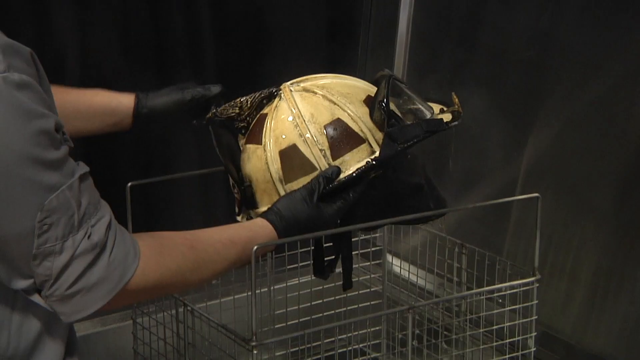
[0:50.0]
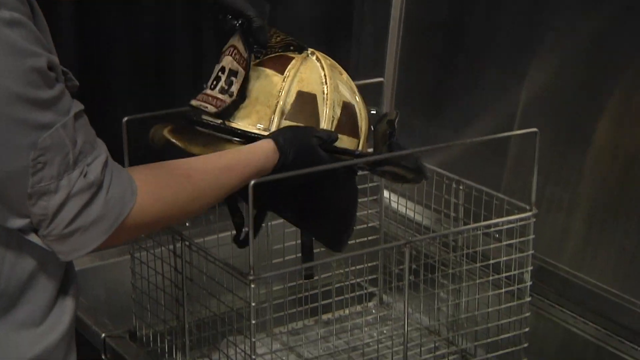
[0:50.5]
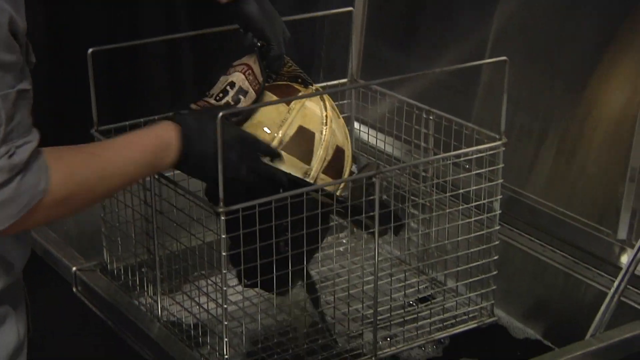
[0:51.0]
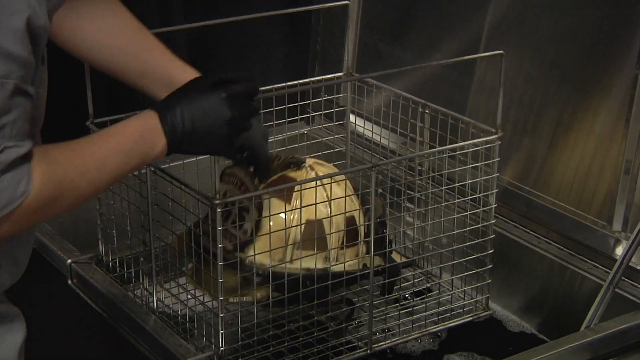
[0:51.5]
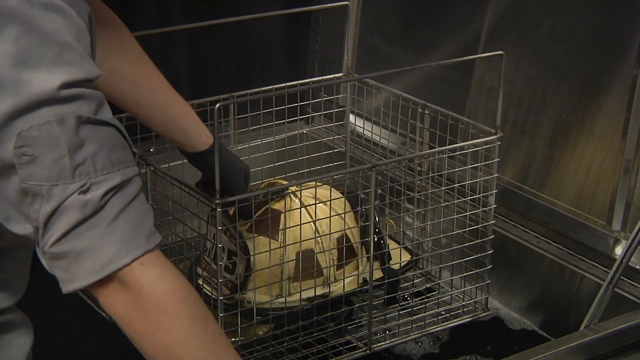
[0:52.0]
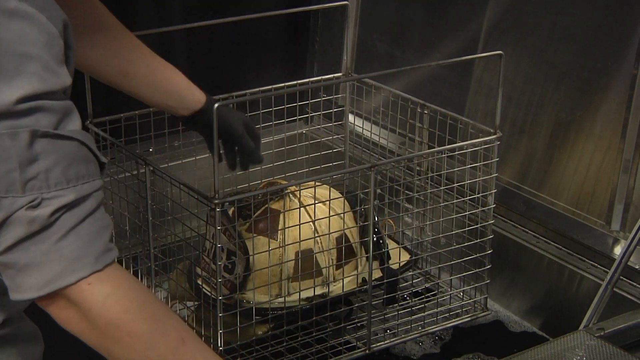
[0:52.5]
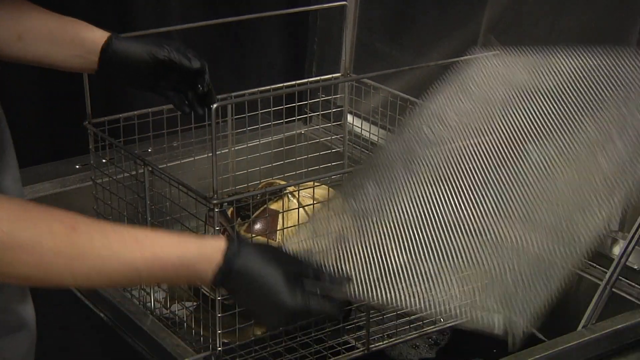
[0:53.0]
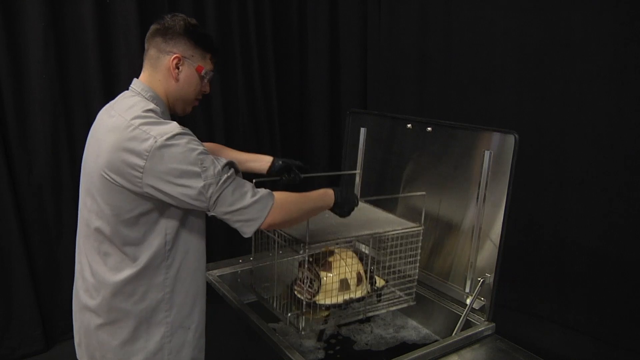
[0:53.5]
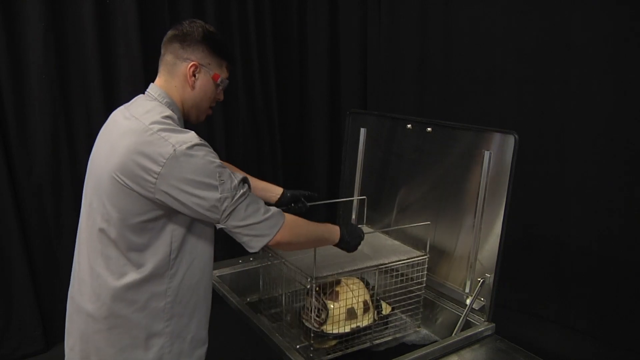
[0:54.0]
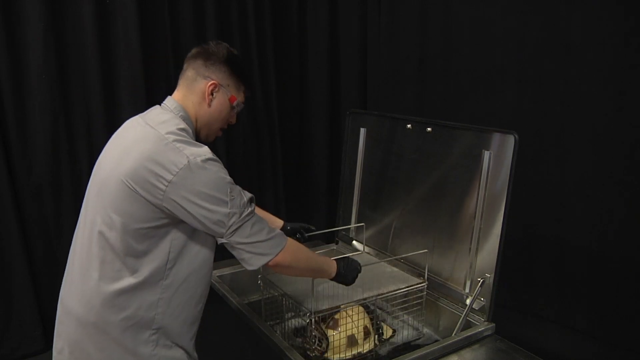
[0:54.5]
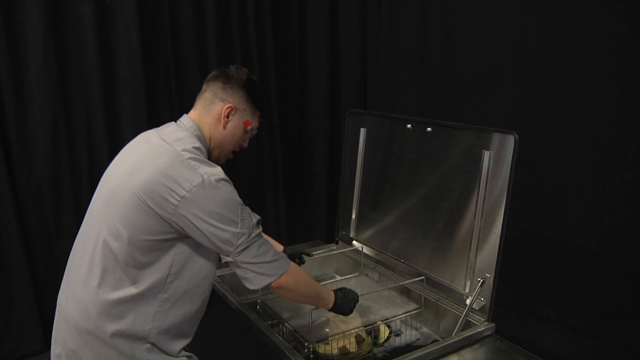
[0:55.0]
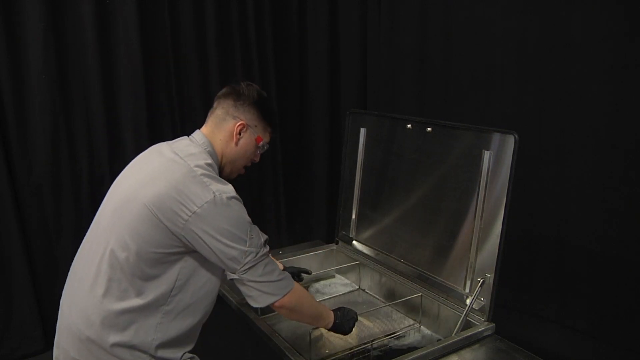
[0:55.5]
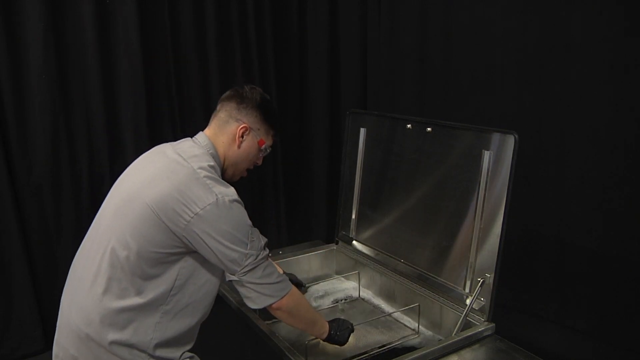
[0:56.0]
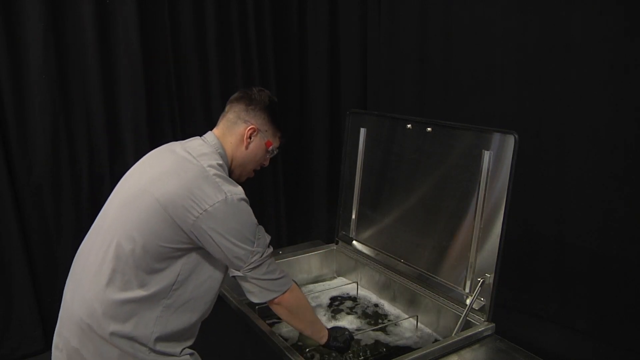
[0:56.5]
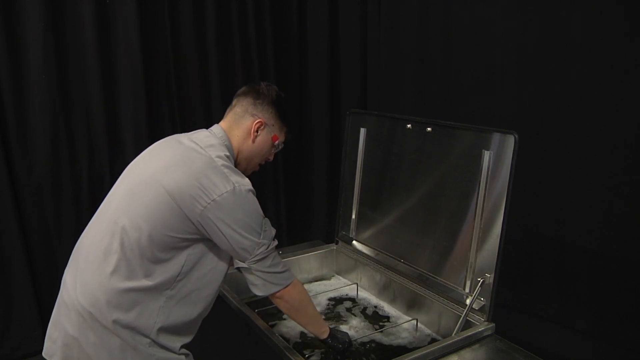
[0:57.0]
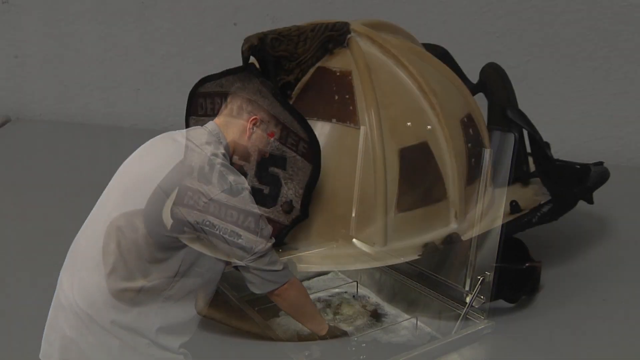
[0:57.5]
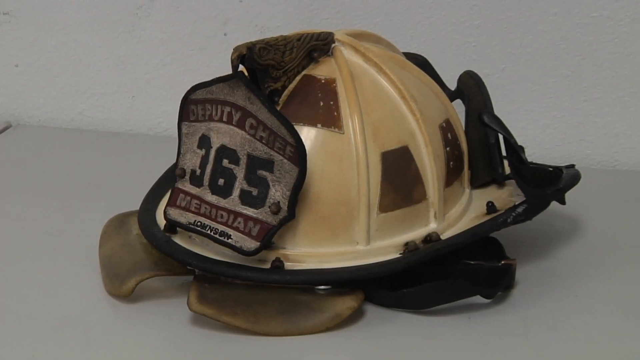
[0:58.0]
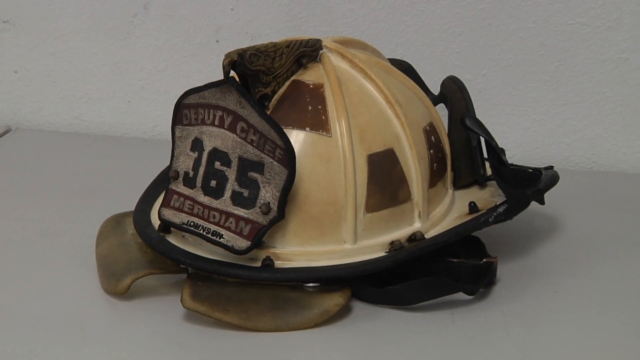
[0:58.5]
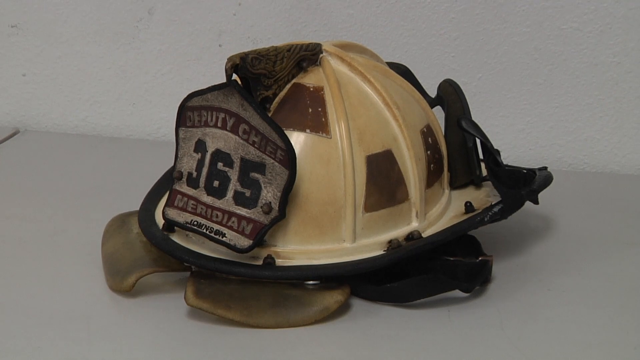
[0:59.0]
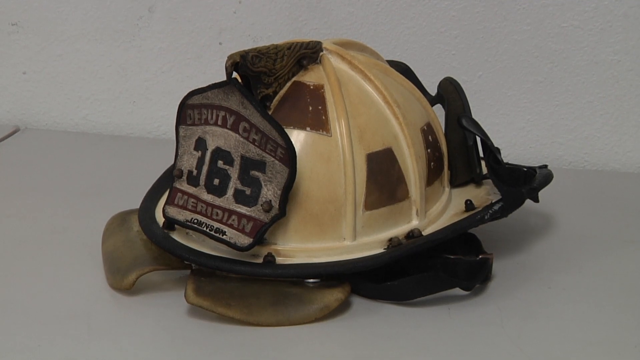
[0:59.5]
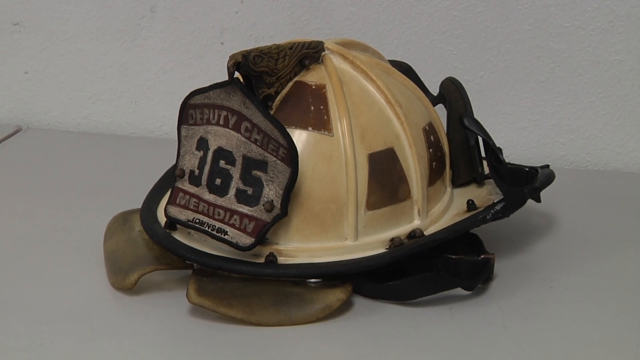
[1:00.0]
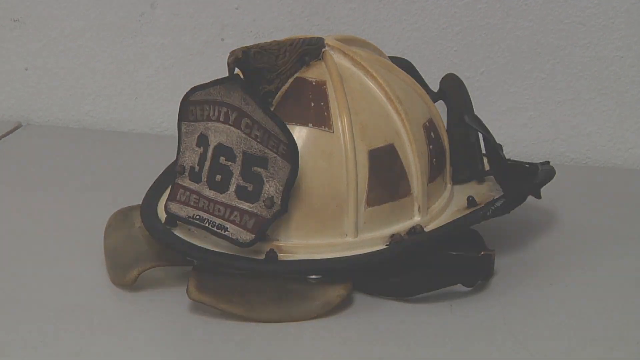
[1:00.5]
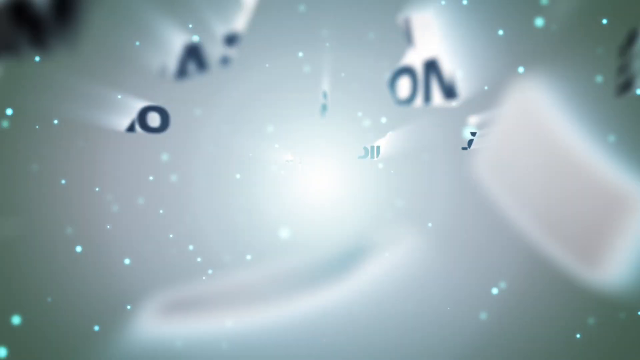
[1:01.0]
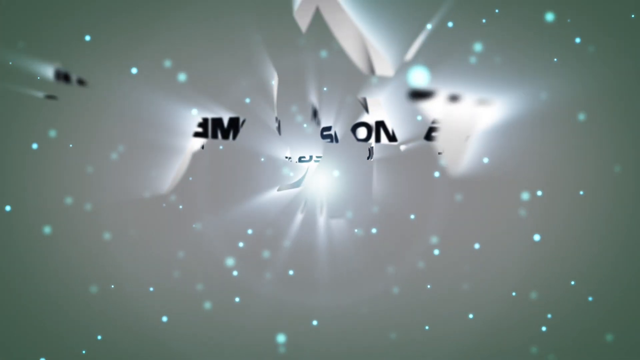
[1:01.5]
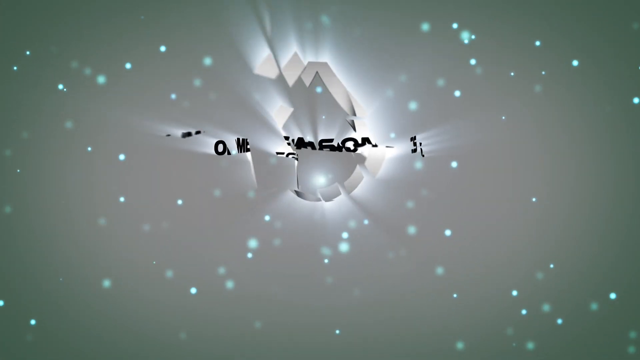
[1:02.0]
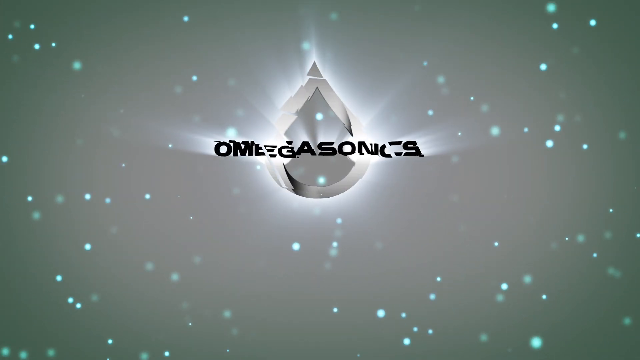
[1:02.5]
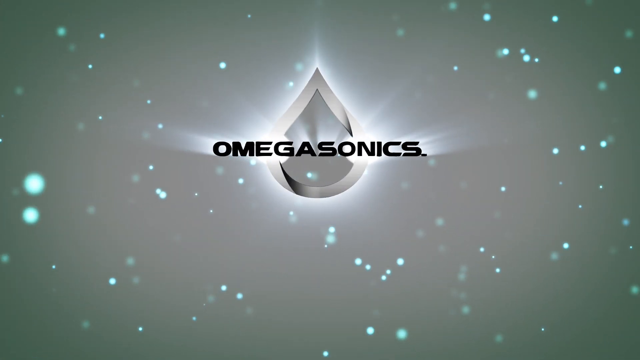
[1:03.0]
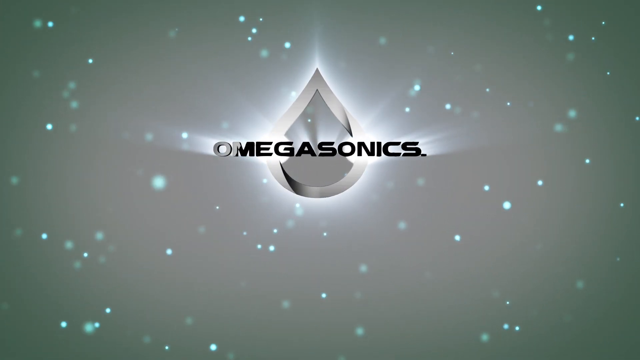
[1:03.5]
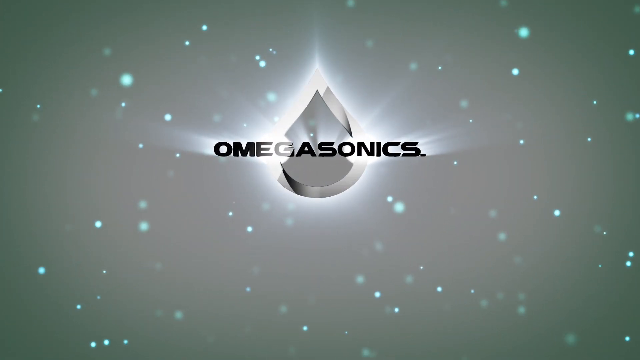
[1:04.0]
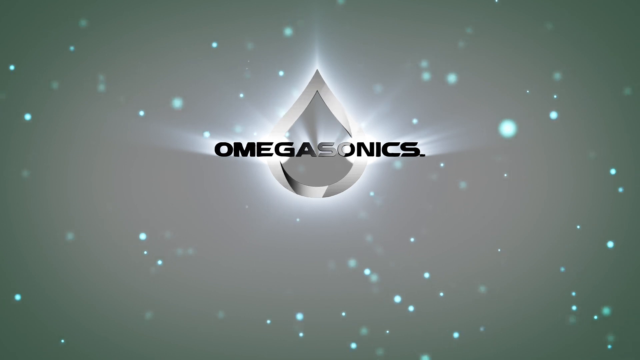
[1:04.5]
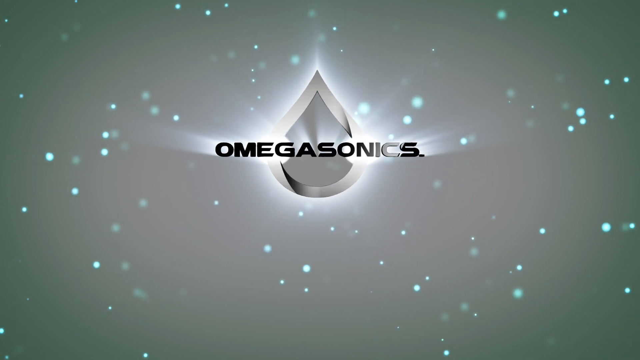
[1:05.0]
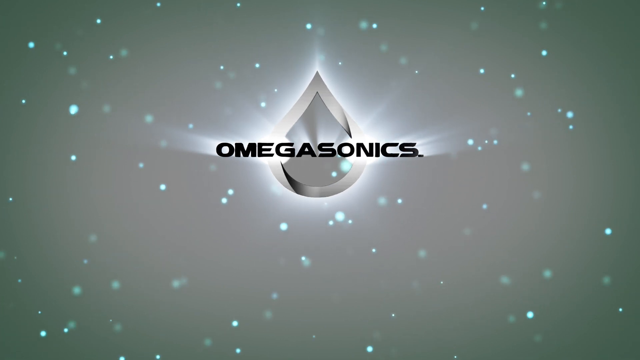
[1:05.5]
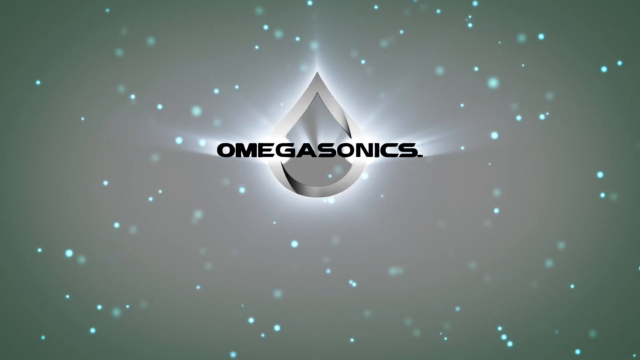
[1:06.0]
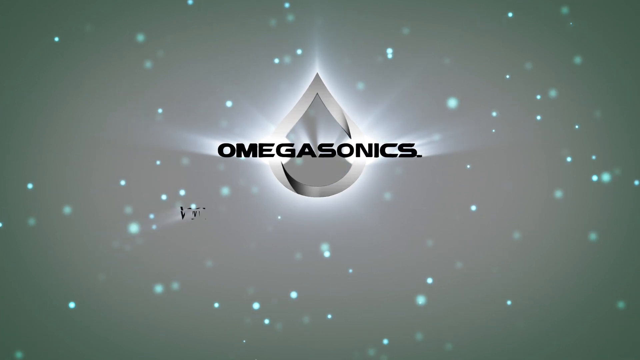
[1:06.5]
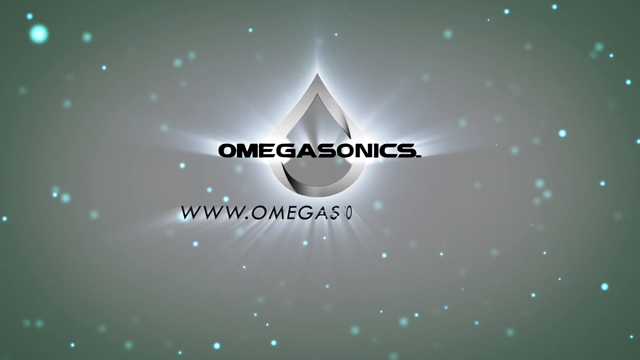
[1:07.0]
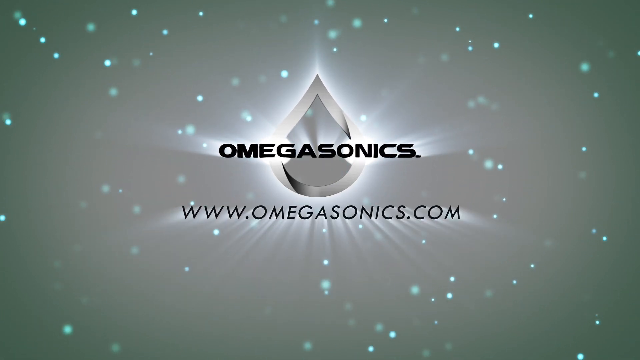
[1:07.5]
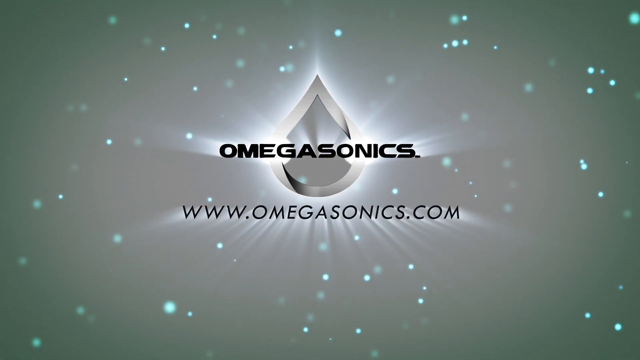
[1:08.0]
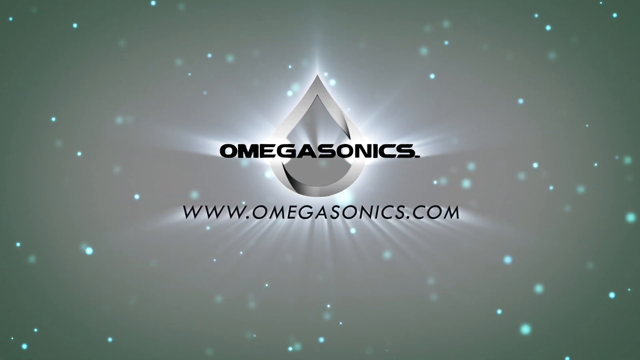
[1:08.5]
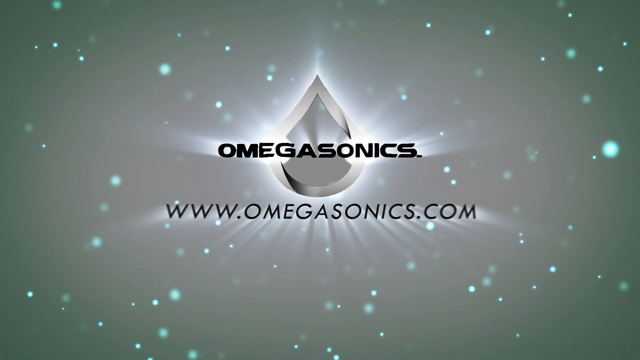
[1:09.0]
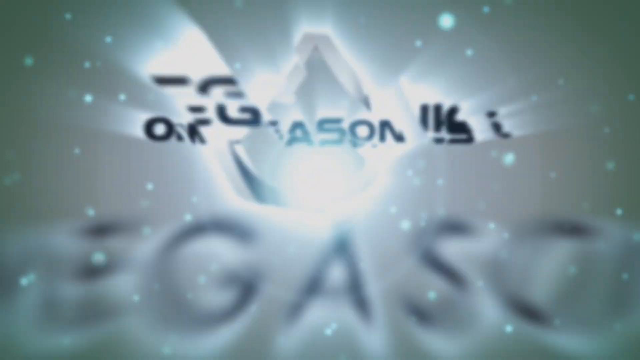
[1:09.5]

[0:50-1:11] The man in black gloves and a gray work shirt puts a fire helmet into the wire metal cage in the stainless steel box, again puts a mesh lid on it, and, holding the cage on either side by the handles, slowly lowers the metal basket into the bubbling liquid. A close-up of the yellow and black firefighter's helmet is shown again; it is now clean of the sooty, smoky residue, and the words "Deputy Chief Meridian" and the numbers "365" on the department badge are clearly legible. The video cuts back to the "OmegaSonics" text with the silver teardrop-shaped logo behind it, on an ombre green and gray background with aqua-colored sparkles moving all around it. As the sparkles move in from the outside of the screen toward the center, the web address "www.omegasonics.com" comes up on the screen and then disappears.